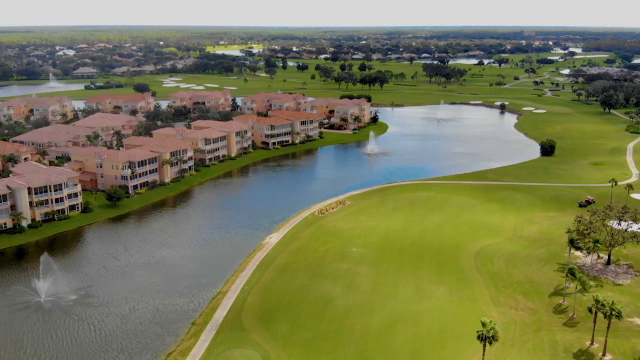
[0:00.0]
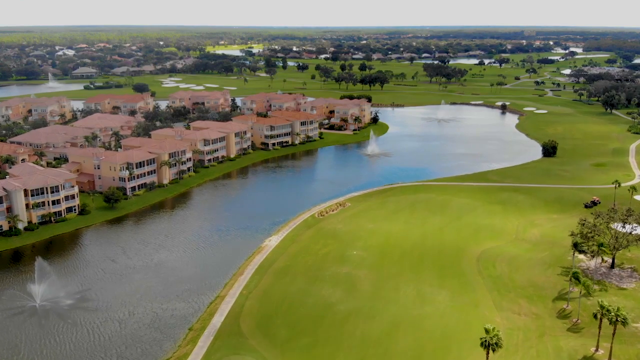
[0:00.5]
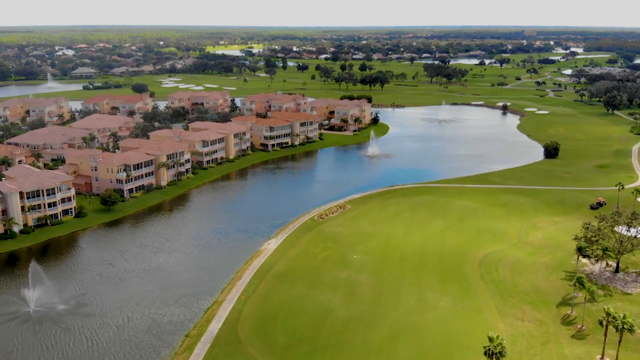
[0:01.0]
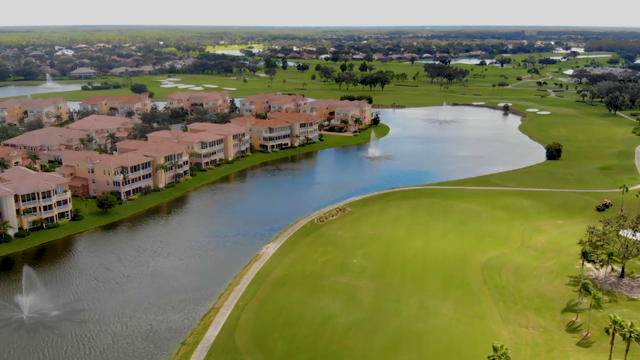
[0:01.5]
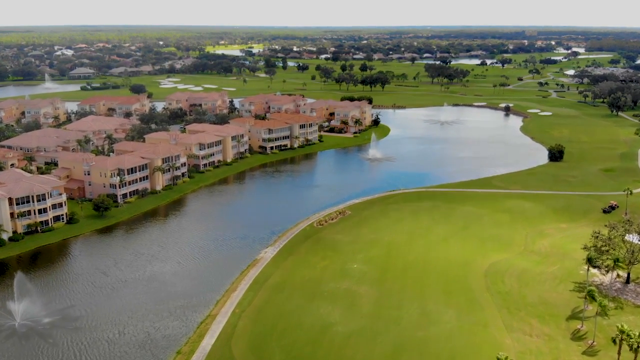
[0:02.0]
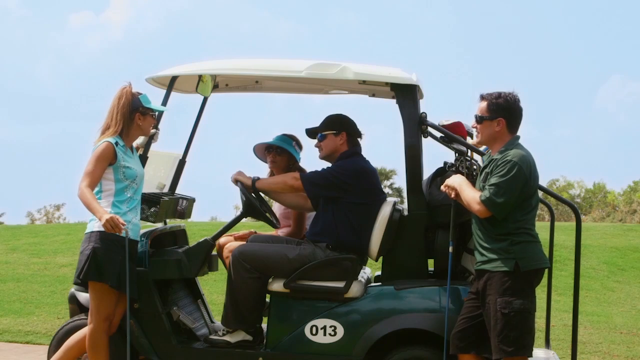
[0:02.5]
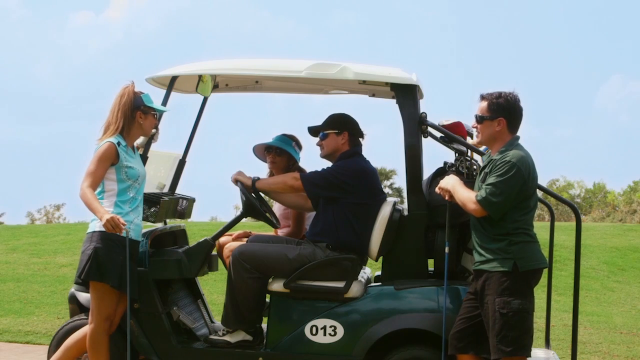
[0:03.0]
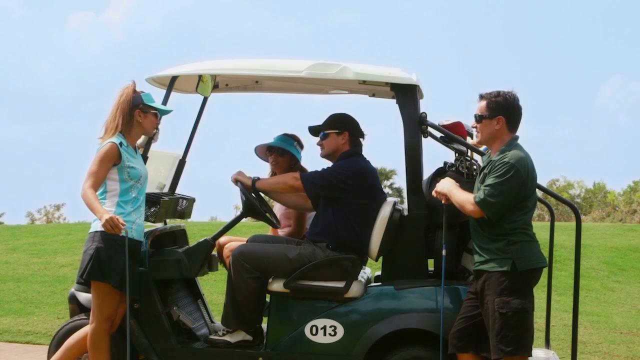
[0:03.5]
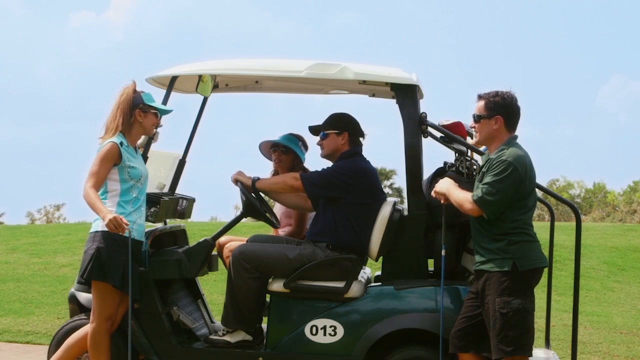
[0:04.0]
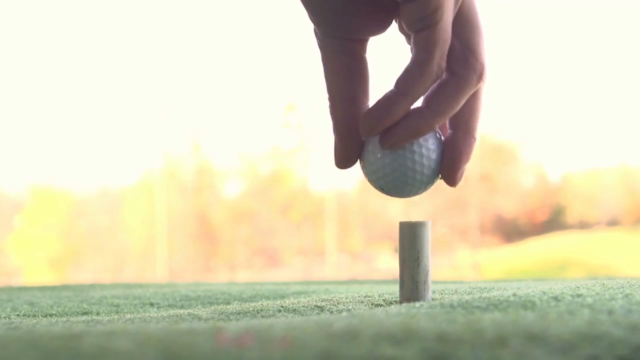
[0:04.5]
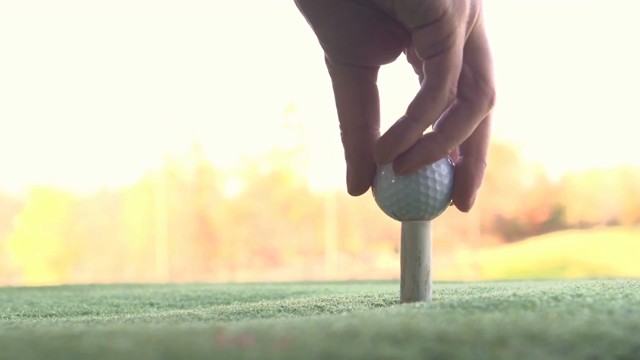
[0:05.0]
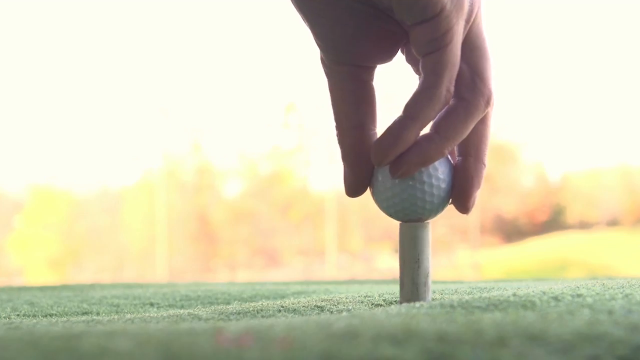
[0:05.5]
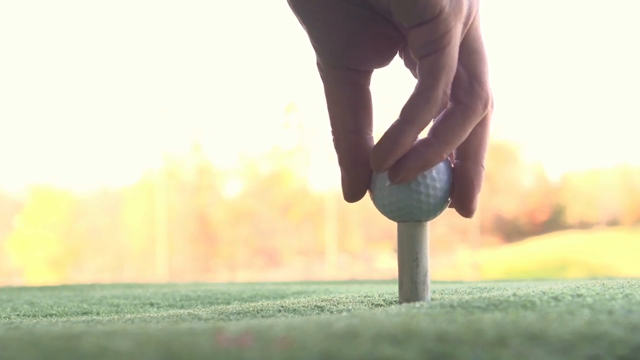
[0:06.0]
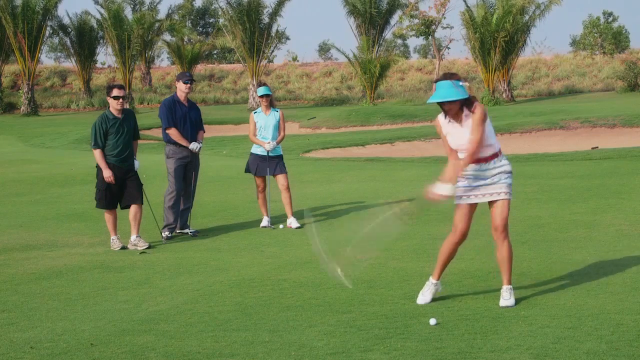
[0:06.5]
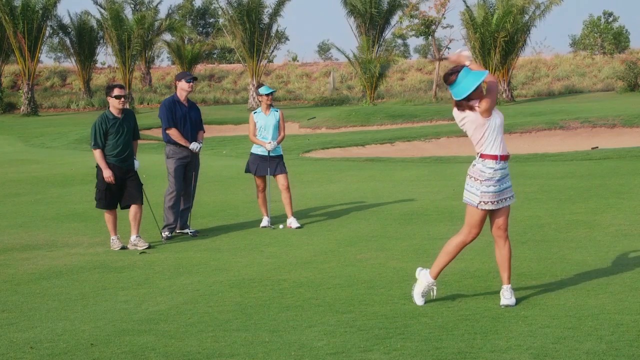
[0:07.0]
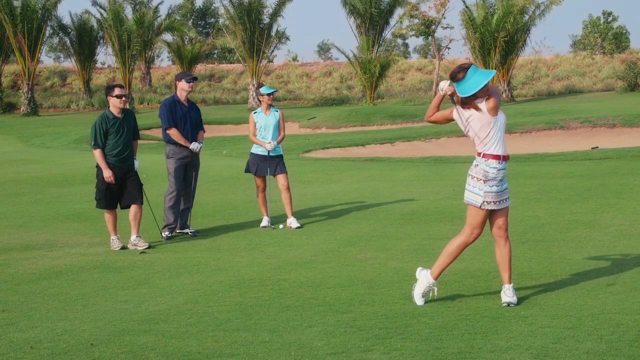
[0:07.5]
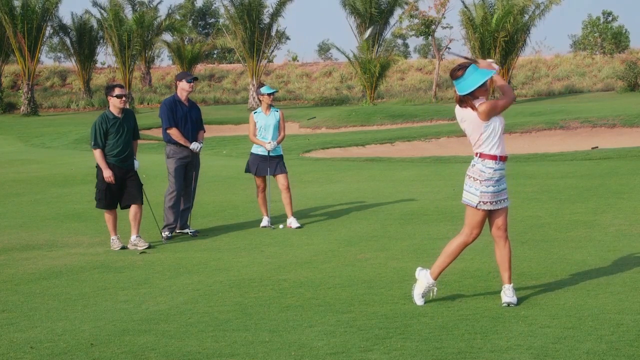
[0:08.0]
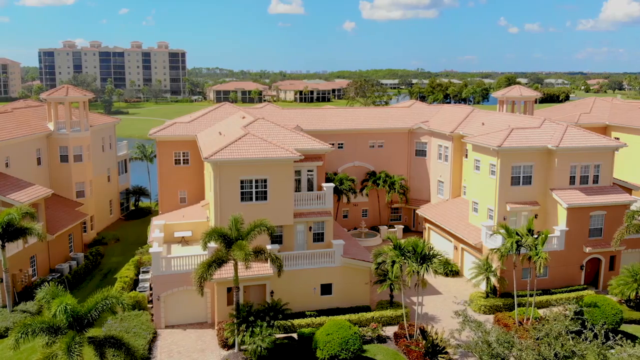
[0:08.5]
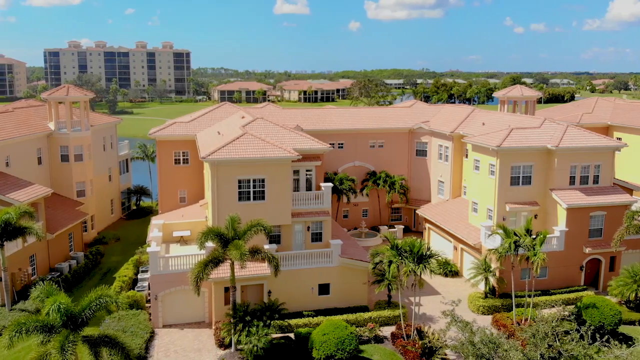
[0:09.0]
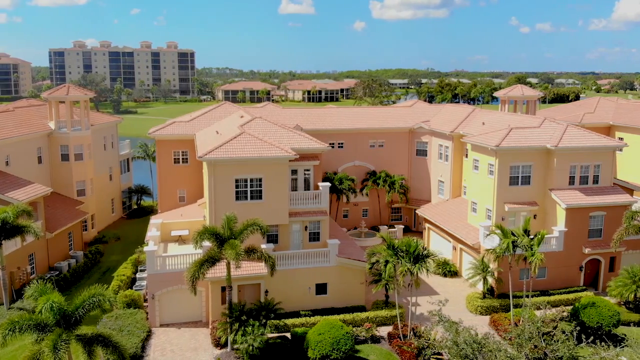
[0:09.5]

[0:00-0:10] People play golf at what looks like a beautiful getaway place, with houses or hotels or something similar, possibly a place where travelers can go to relax. Some people are on the golf course, and somebody throws one of the balls. The buildings are very close to a lake, and the place looks like it is on an island. The environment is pretty, serene and calm.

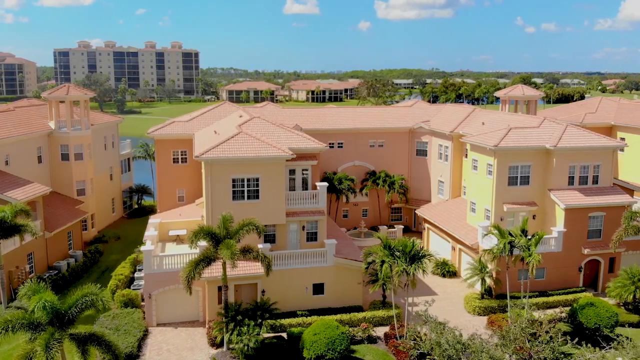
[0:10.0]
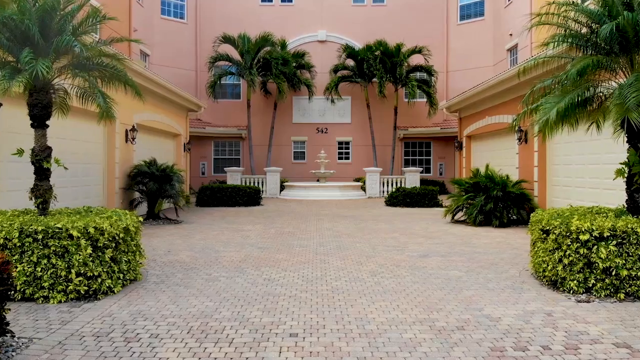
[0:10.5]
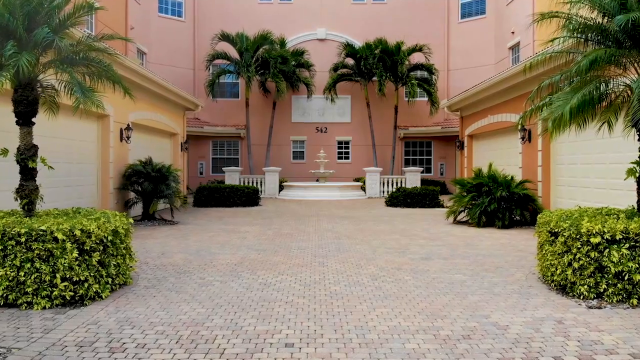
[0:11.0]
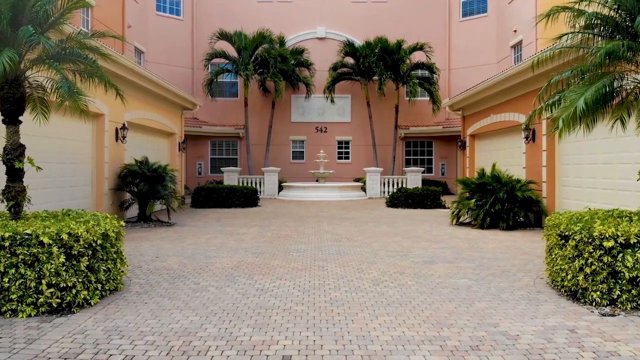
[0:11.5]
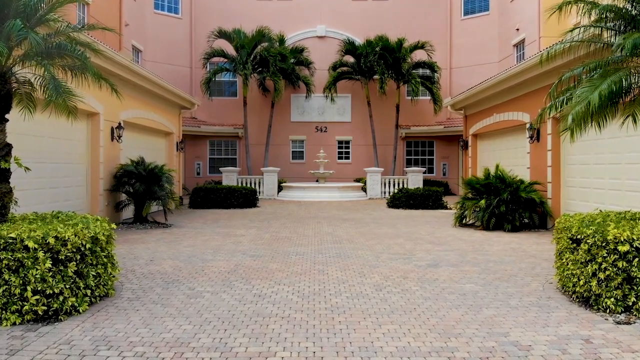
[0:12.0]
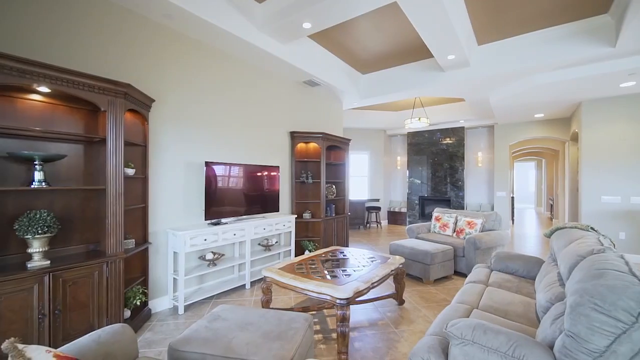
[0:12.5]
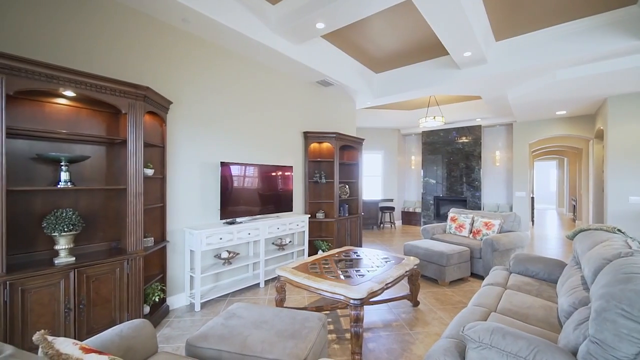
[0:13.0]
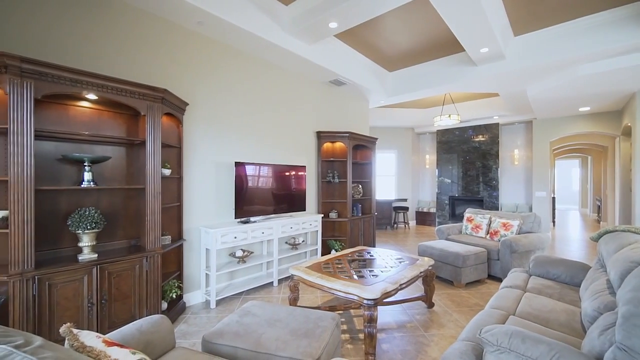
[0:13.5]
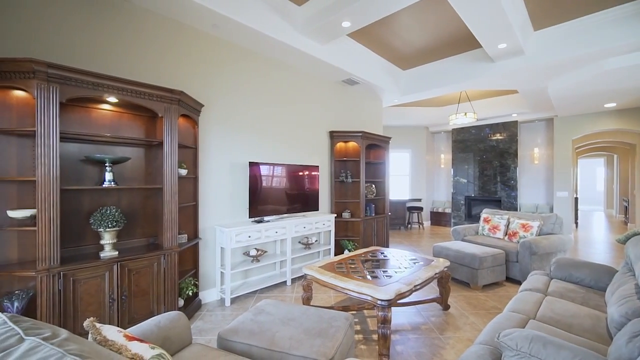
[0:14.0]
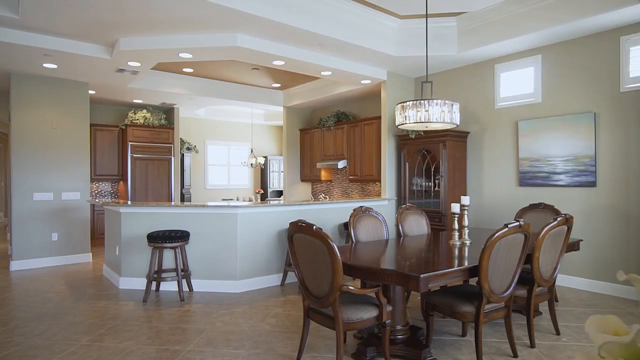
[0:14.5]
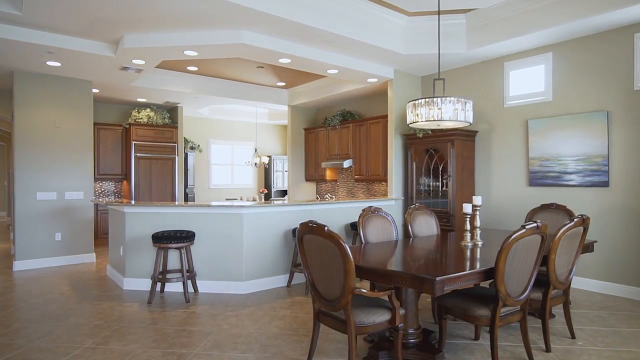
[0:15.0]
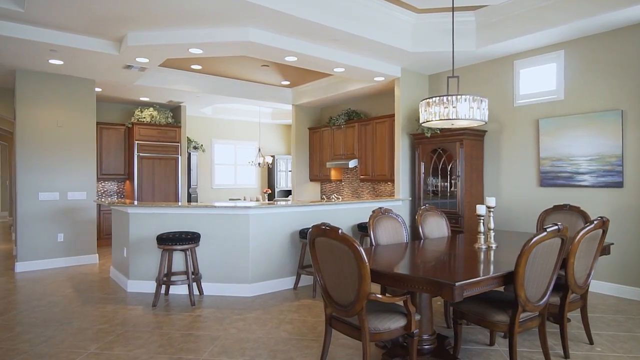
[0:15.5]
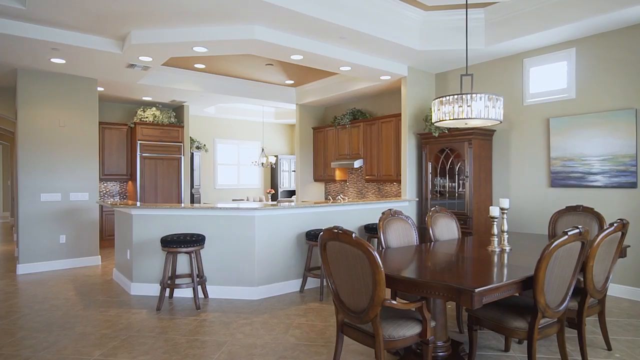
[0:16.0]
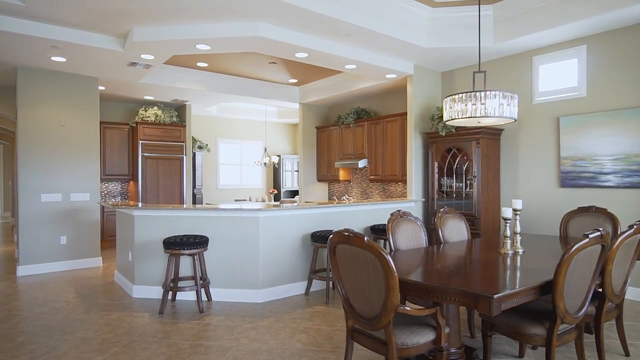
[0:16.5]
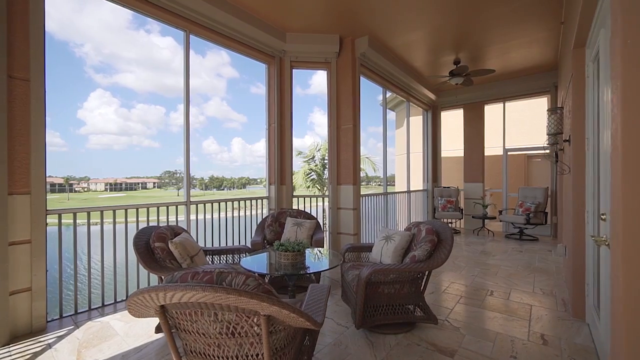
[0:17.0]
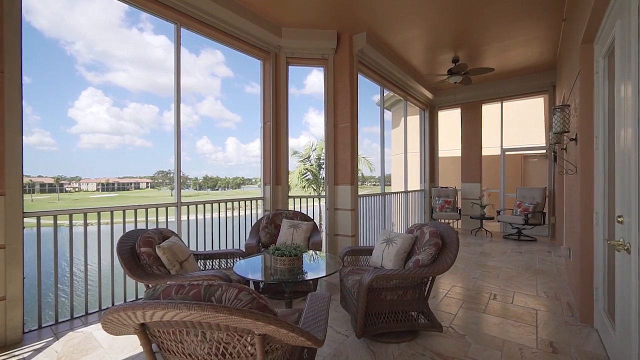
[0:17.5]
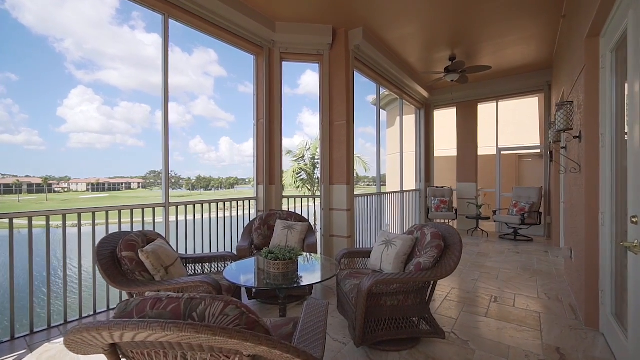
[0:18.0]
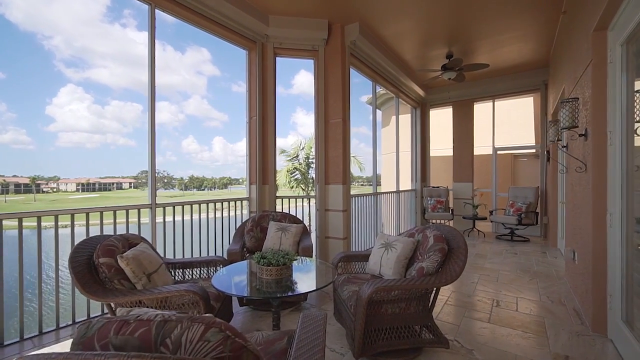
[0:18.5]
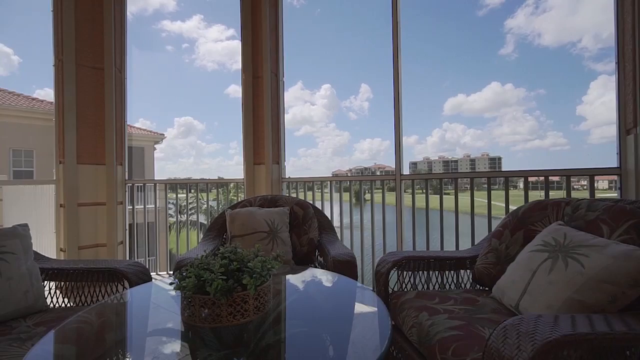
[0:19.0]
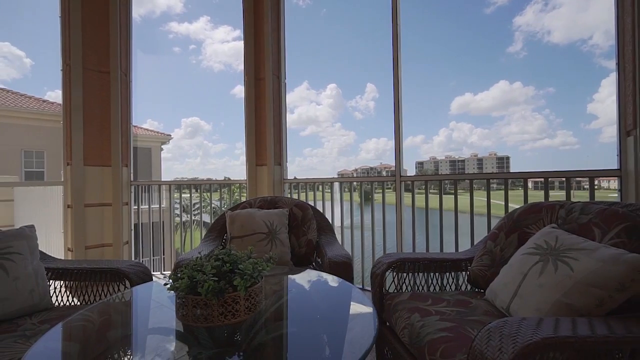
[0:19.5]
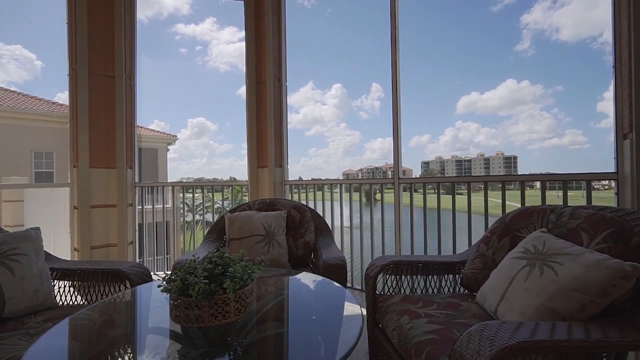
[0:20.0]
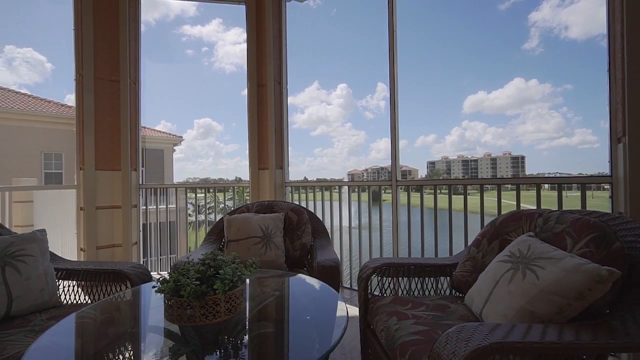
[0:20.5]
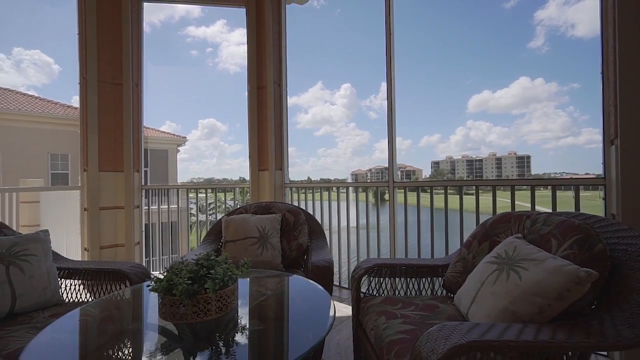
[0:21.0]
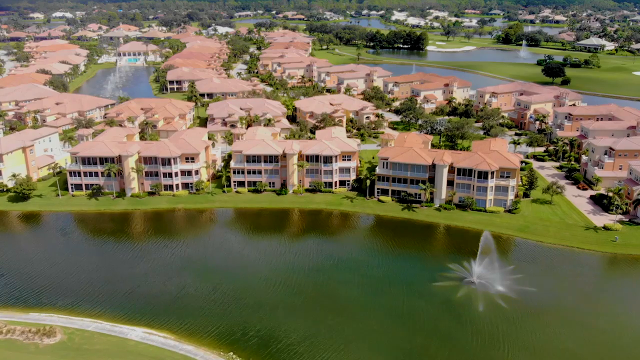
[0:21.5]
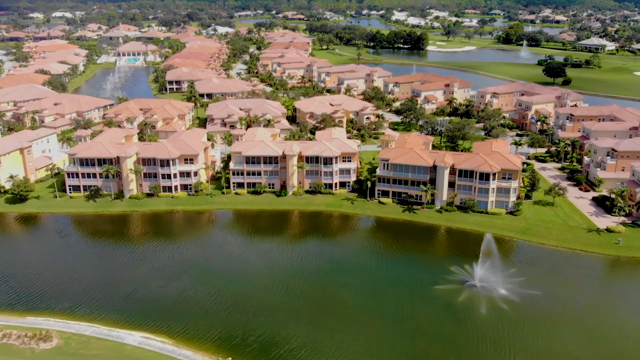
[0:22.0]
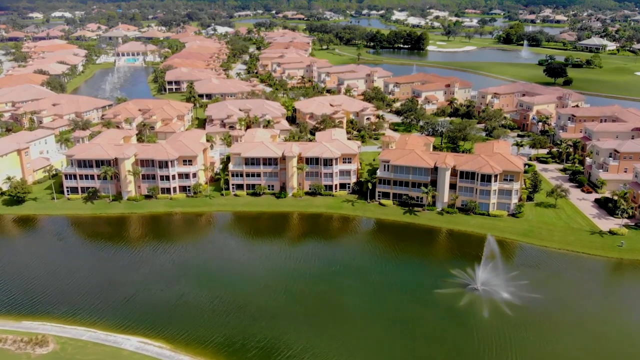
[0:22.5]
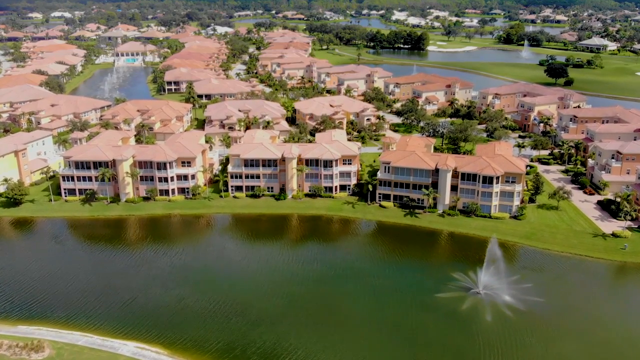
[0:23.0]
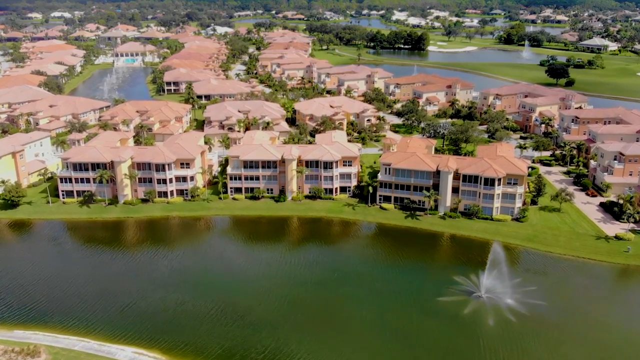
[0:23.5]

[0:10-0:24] The video apparently shows the inside of the same building seen outside earlier. It starts with the front area, which has trees around it and a water fountain in front. Then it shows the inside of the building, with nice chairs and tables; the chairs look like ergonomic chairs. The place is very clean and looks like a calm environment where someone could relax, with nice furniture and aesthetics, and it is very close to nature.